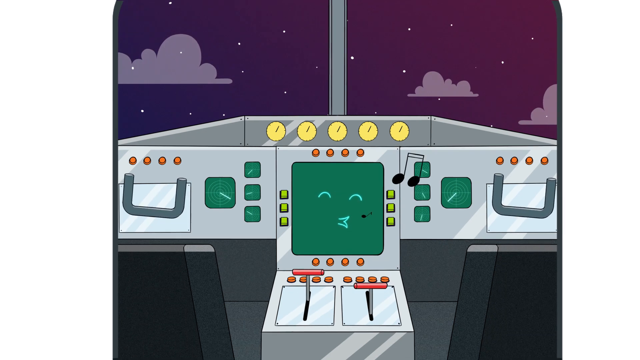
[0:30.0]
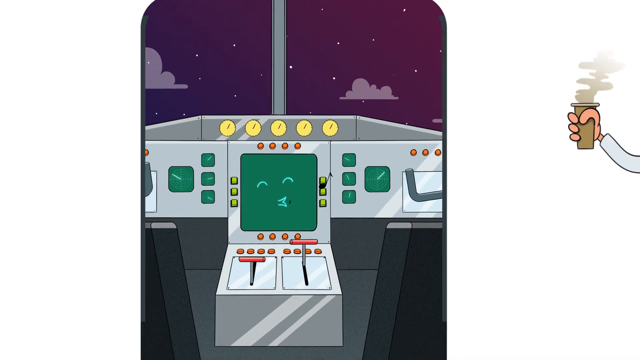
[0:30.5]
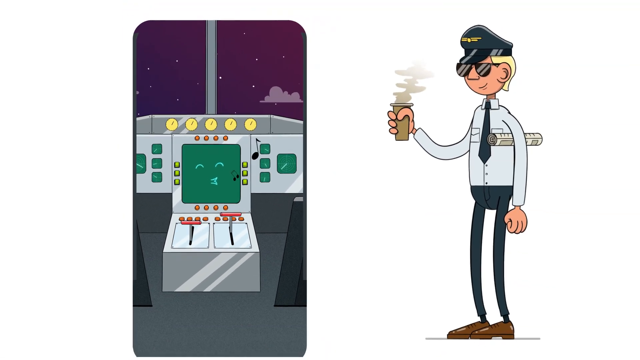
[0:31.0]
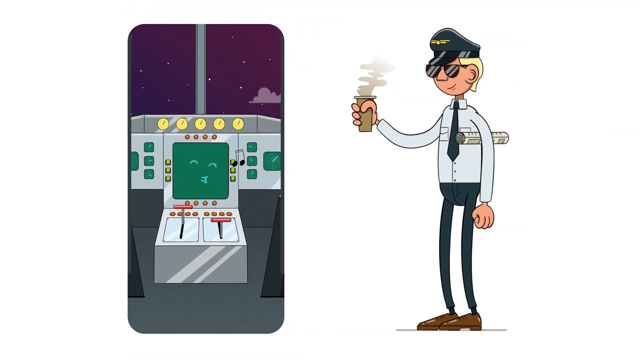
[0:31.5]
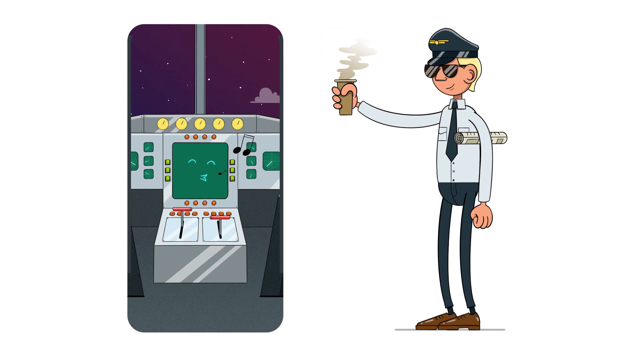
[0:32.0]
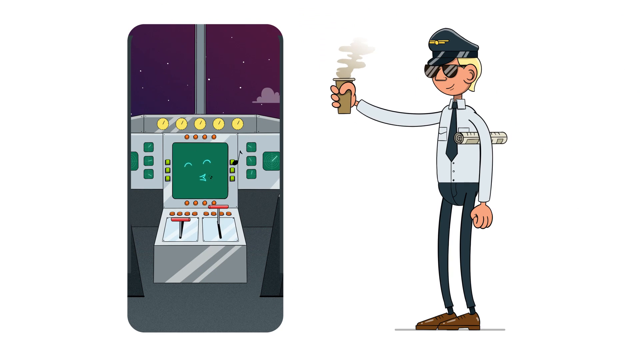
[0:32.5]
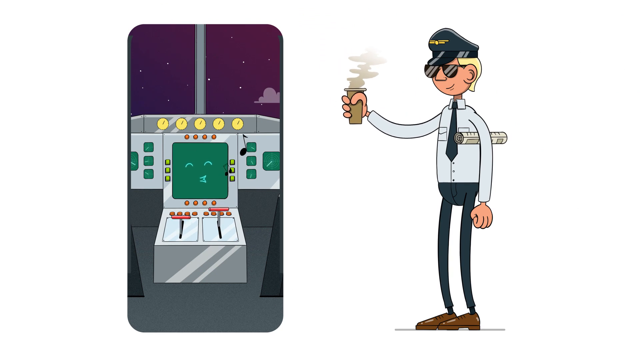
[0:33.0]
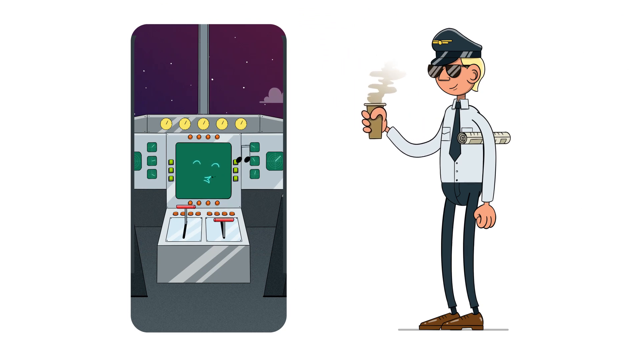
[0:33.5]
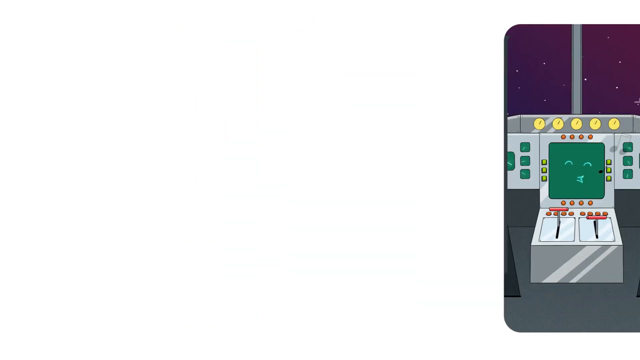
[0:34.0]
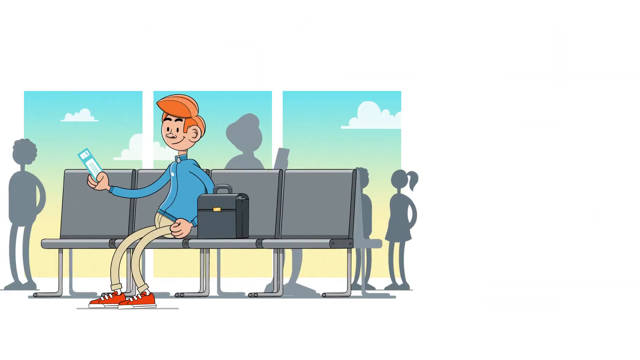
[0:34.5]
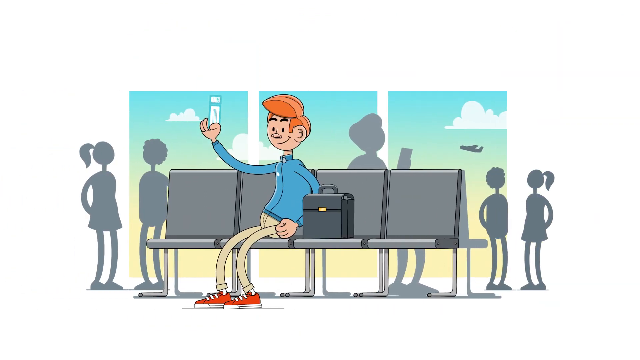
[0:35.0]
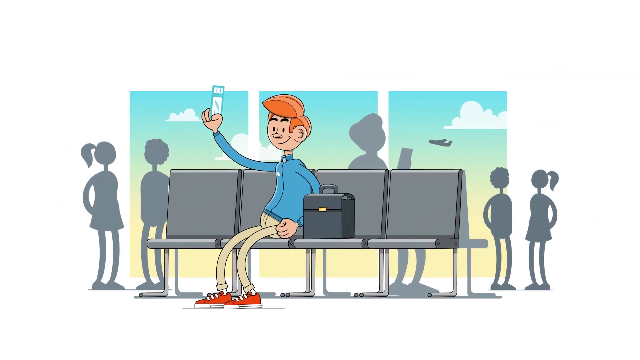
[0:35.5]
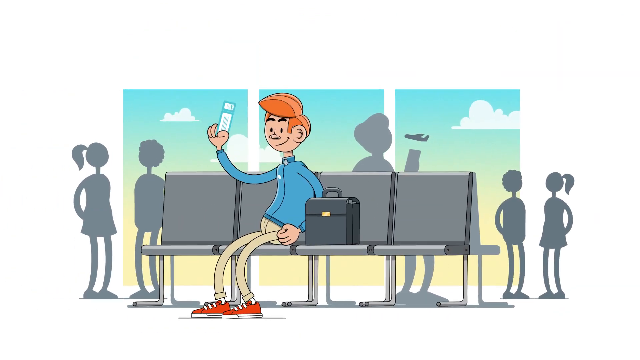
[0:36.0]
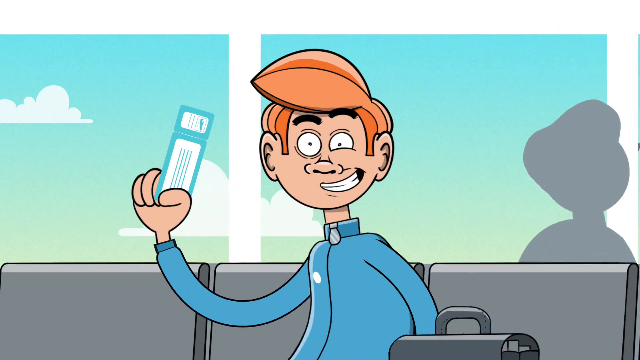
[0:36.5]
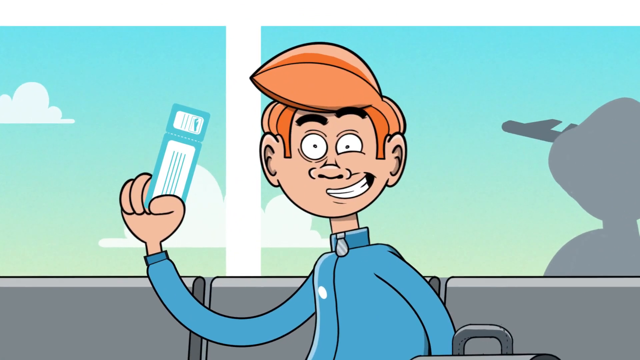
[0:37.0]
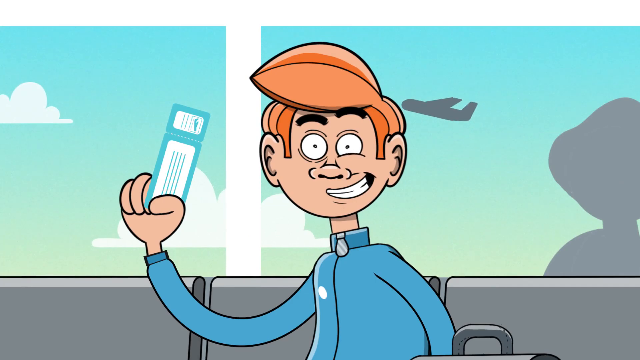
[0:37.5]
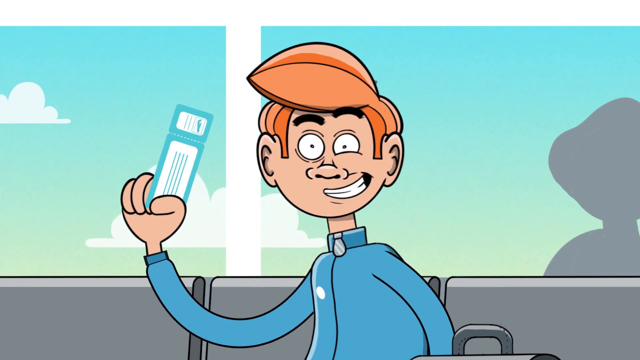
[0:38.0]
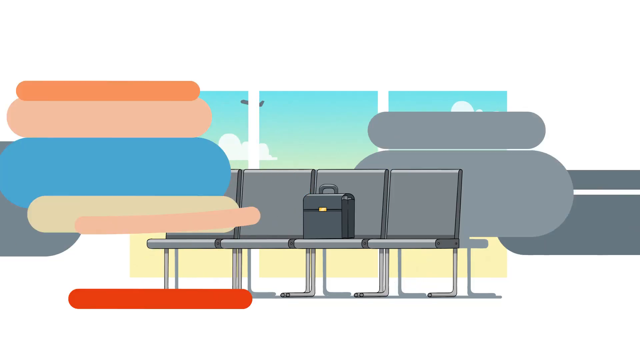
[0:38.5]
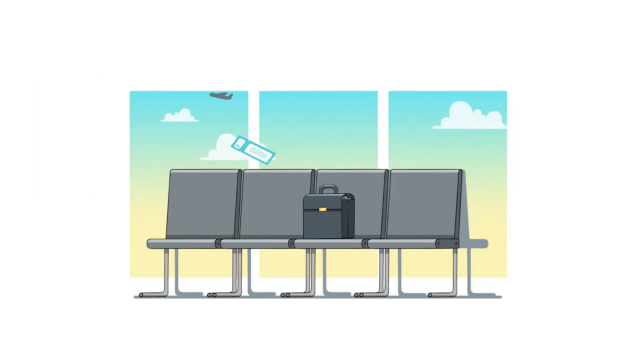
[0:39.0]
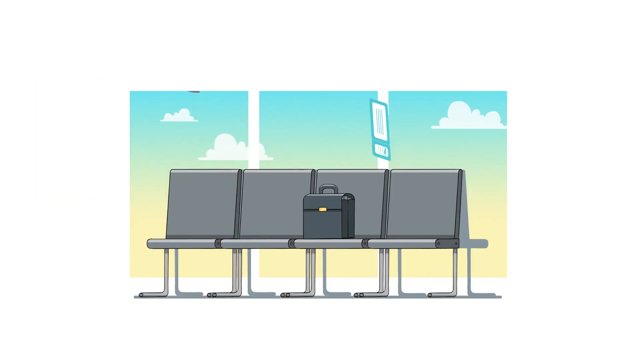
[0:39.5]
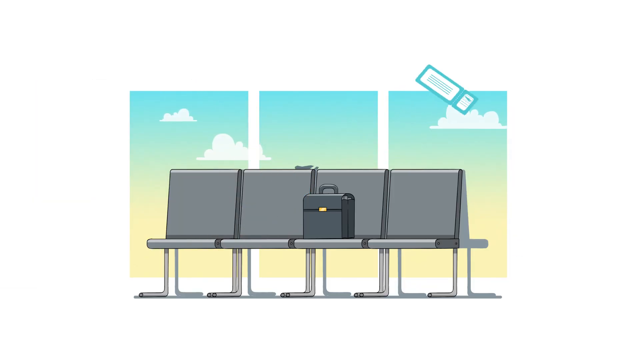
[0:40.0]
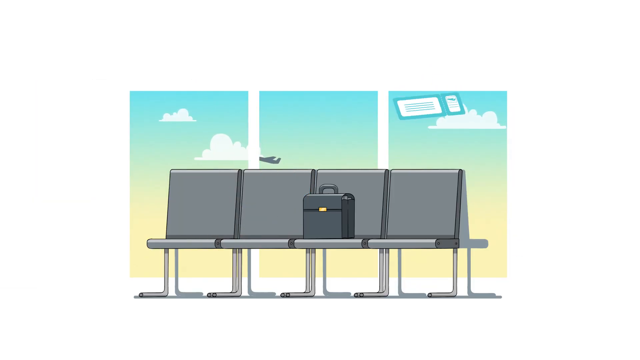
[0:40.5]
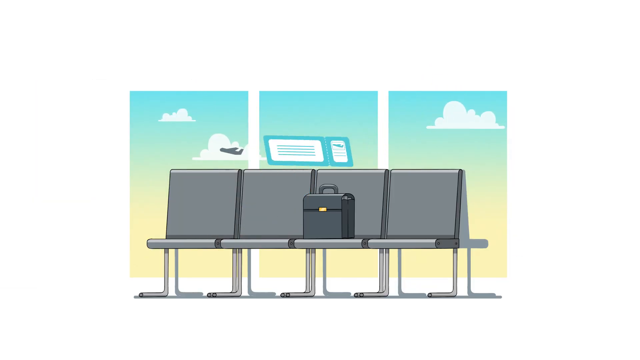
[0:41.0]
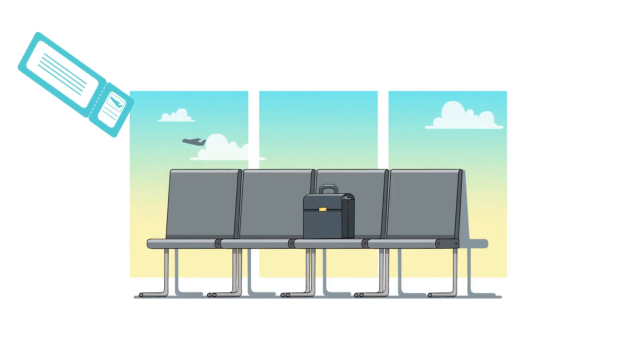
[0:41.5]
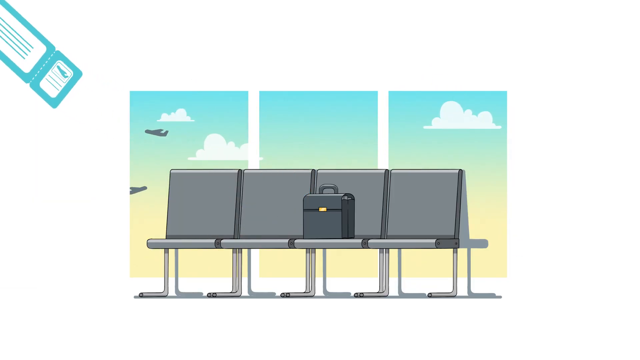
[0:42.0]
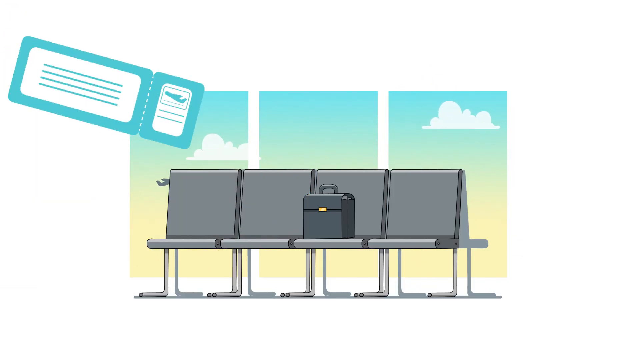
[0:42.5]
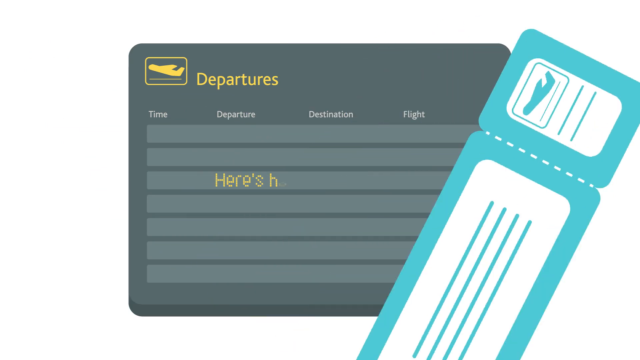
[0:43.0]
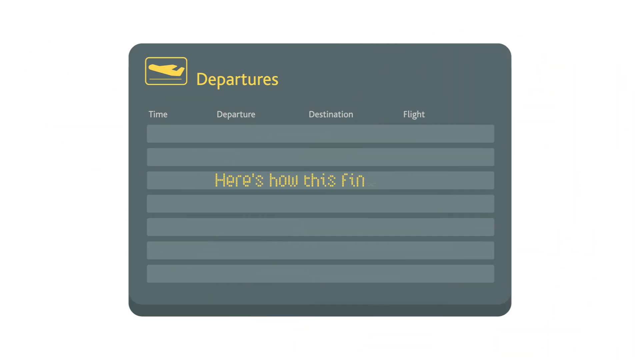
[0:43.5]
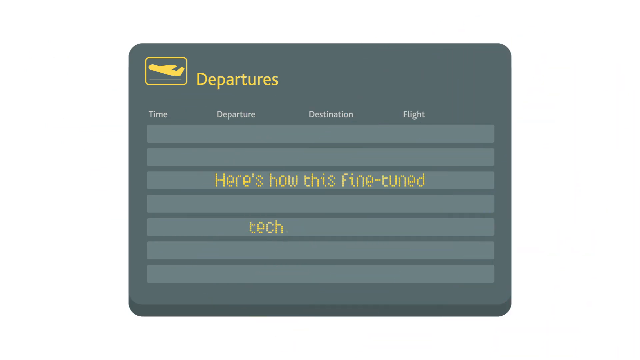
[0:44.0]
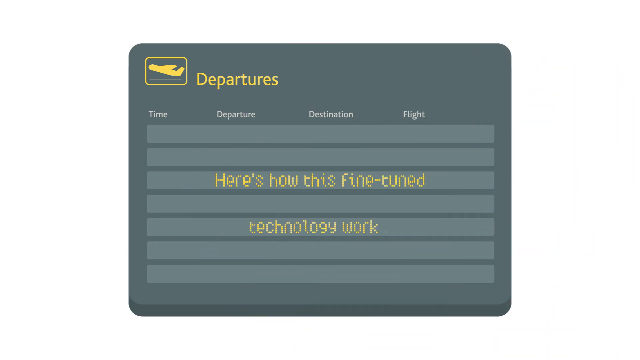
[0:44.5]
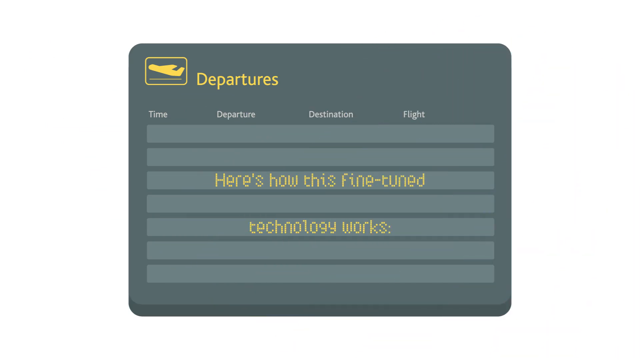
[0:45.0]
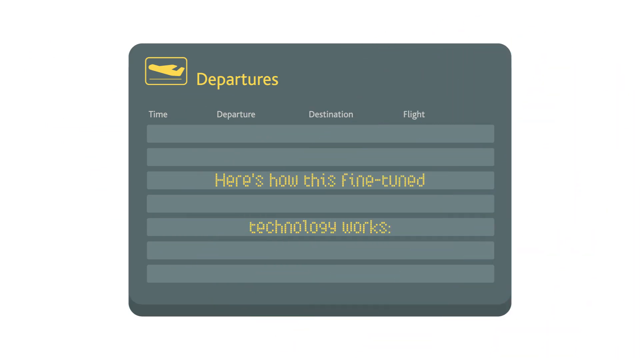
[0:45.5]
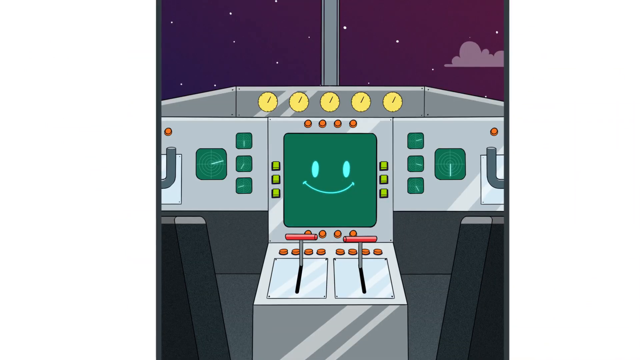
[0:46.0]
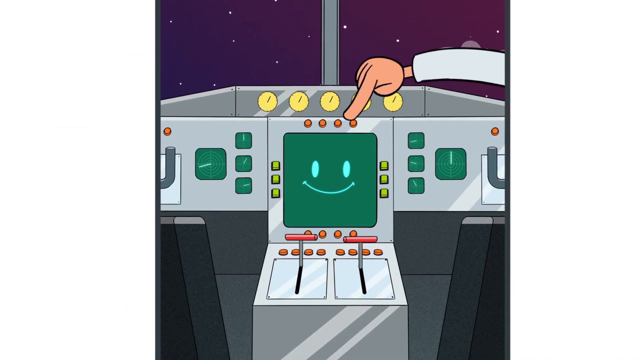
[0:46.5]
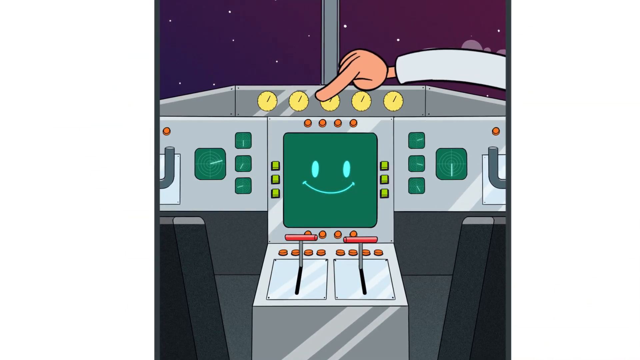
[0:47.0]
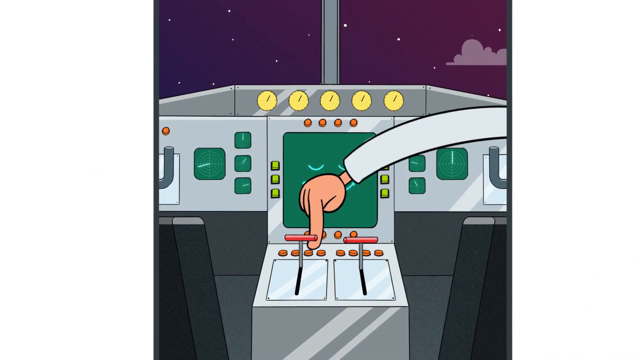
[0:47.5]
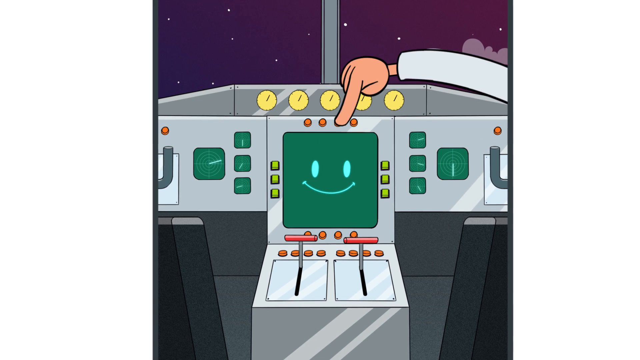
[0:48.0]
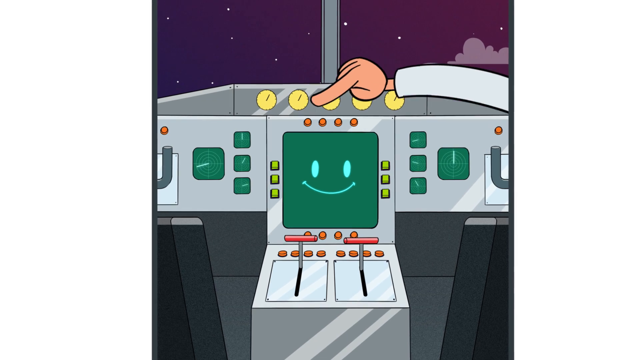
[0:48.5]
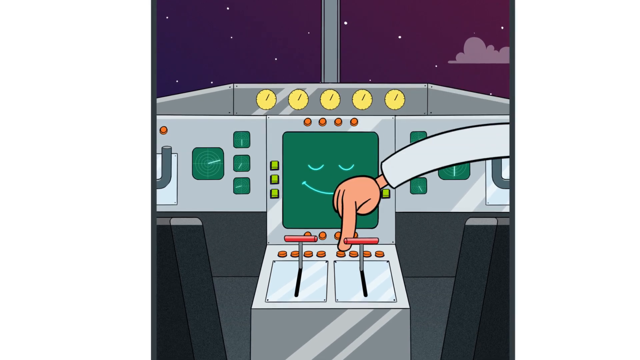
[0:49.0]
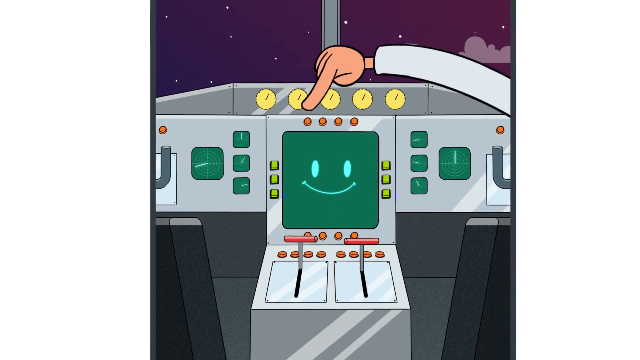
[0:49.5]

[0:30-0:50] An animated airplane cockpit shows a large square screen with a smiley face in the center of a silver console. Red handles at the bottom of the screen move up and down, and small square green radars each have radar arms rotating around them. The view zooms out of the cockpit, which is now shown in what looks like a smartphone. On the right is a drawing of a blonde-haired pilot in a white shirt, black pants, black tie, black sunglasses and black hat. He holds a coffee in his right hand, his right arm parallel to the ground, pointing the coffee toward the left side of the screen, while his left arm rests at his side with a rolled-up newspaper under his left armpit. Next, an animated red-headed man in a blue long-sleeved shirt, khaki pants and red sneakers sits on a row of four seats in an airport waiting area, with a bag to his left. His right arm is stretched out slightly parallel to the ground, holding what looks like a white ticket, and his left arm rests at his left side. In the background are abstract gray drawings of people and three windows showing a bluish-yellow sky with a few clouds. The camera zooms in on the man, who looks a little nervous, his smile shifted to the left side of his face and his eyes wide. A close-up shows his ticket, which has a blue outline and a white inside, while an abstract gray drawing of a plane moves from right to left in the background. All the people become blurs and exit the screen, leaving behind a black bag with a gold buckle on the seat. The man's ticket floats across the screen and then toward the front of the screen. A grayish departure board on a white background follows, with "departures" written in gold at the top and a gold airplane drawing in the top left. The rows are blank except for a gold sentence: "here's how this fine-tuned technology works". The scene moves to a cockpit with a green smiley-face screen in the center, yellow clocks at the top, green radars on the left and right of the smiling square, and two red handles below it. From the right side of the screen, an arm in a white shirt with a pointed finger reaches in and presses red buttons below the smiley-face screen.